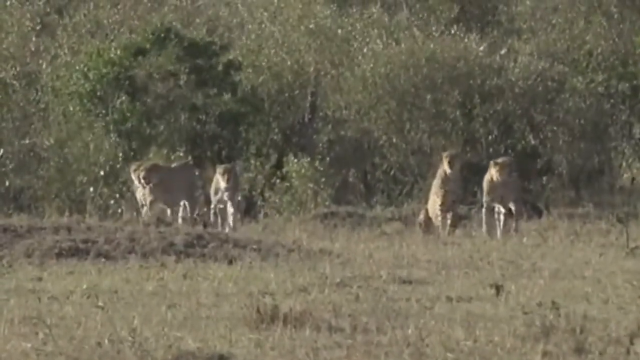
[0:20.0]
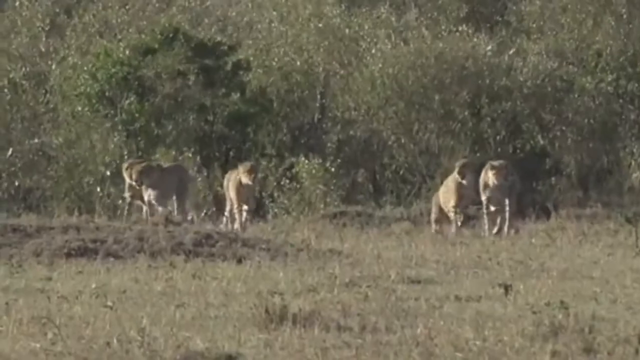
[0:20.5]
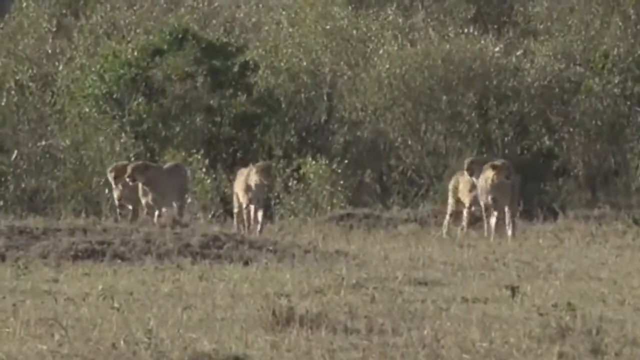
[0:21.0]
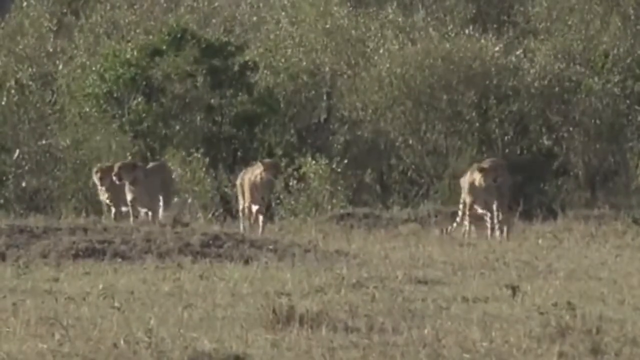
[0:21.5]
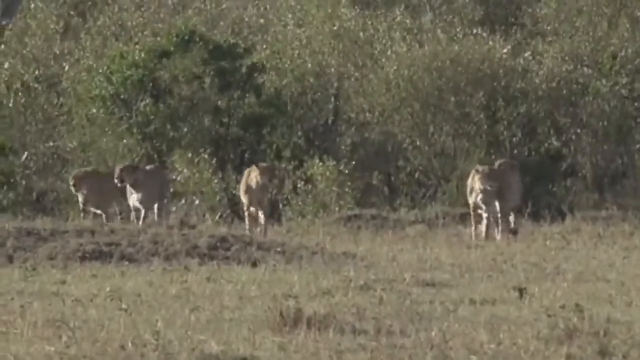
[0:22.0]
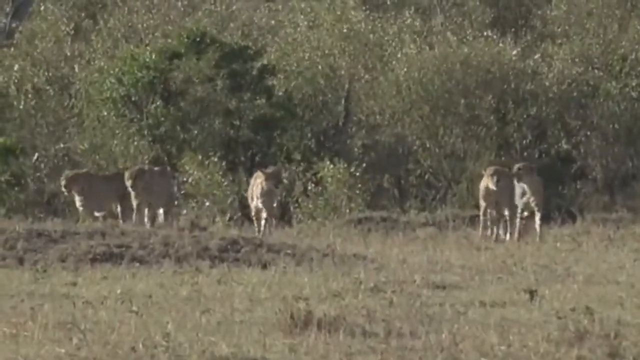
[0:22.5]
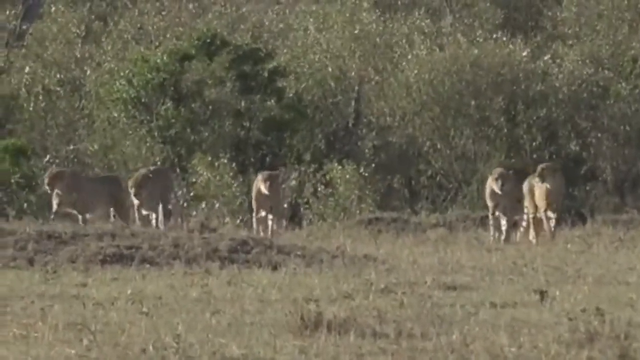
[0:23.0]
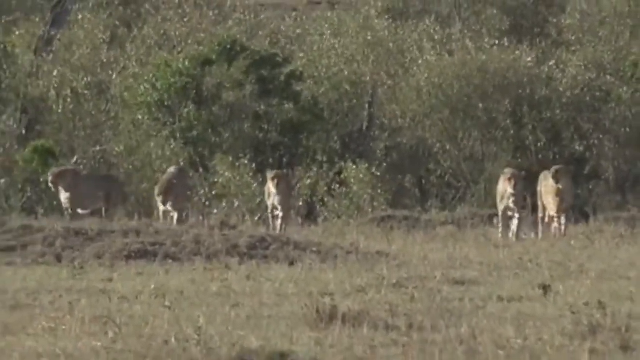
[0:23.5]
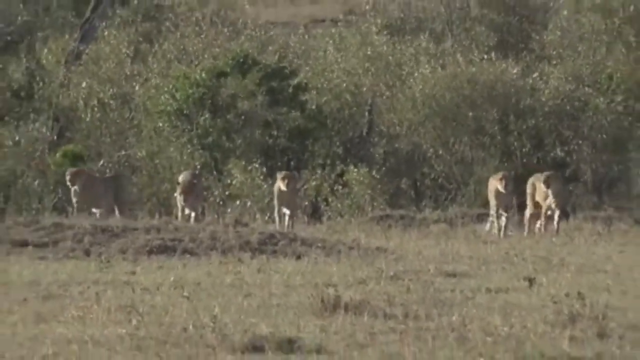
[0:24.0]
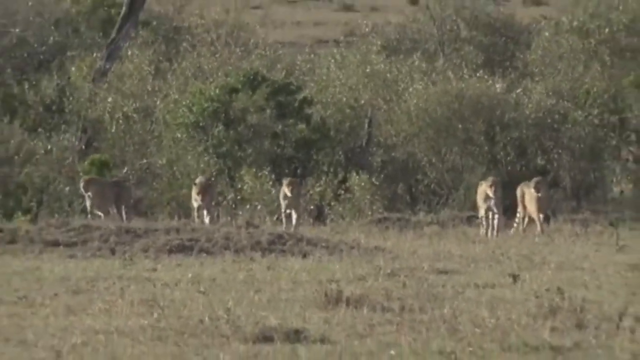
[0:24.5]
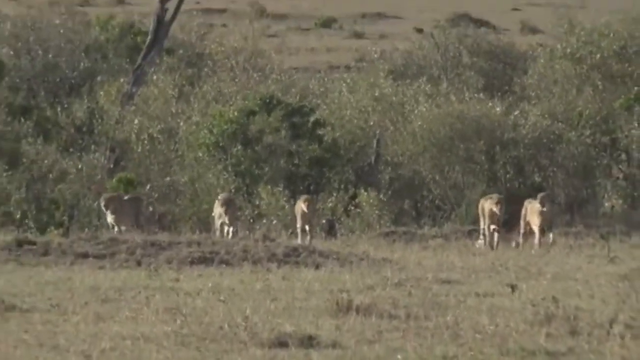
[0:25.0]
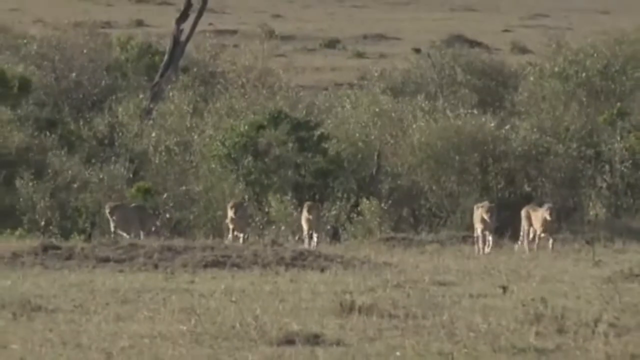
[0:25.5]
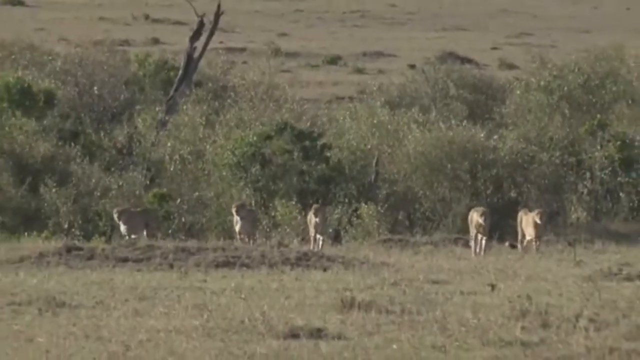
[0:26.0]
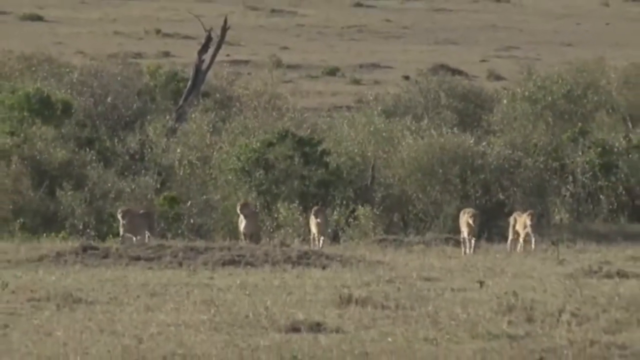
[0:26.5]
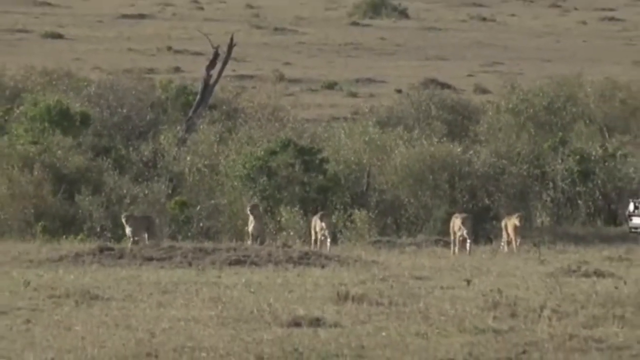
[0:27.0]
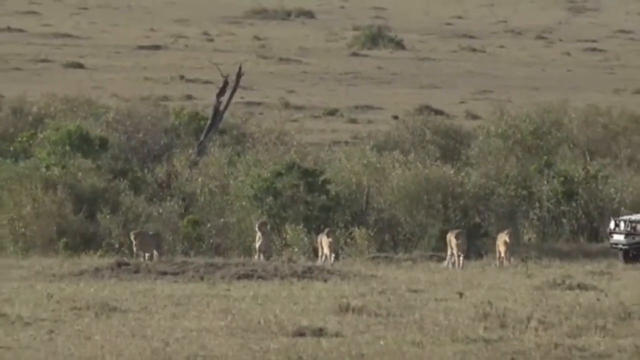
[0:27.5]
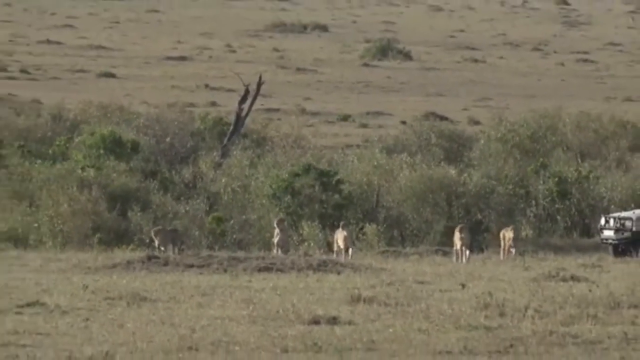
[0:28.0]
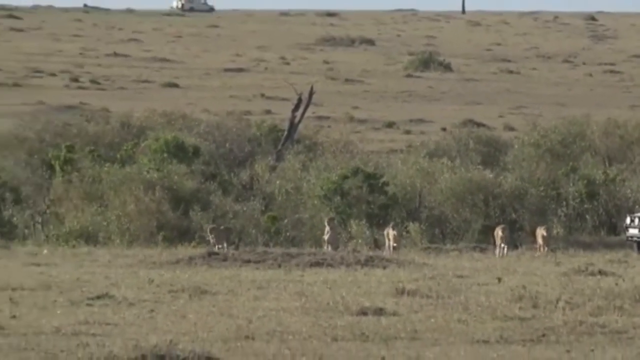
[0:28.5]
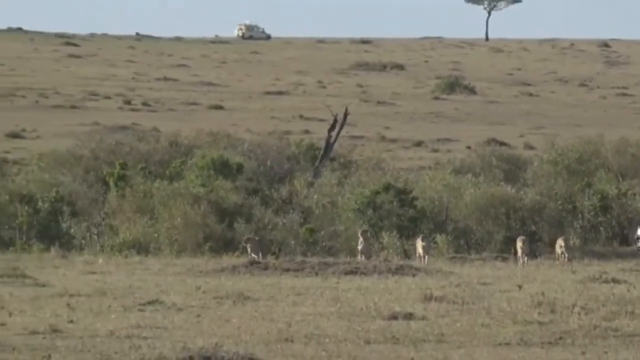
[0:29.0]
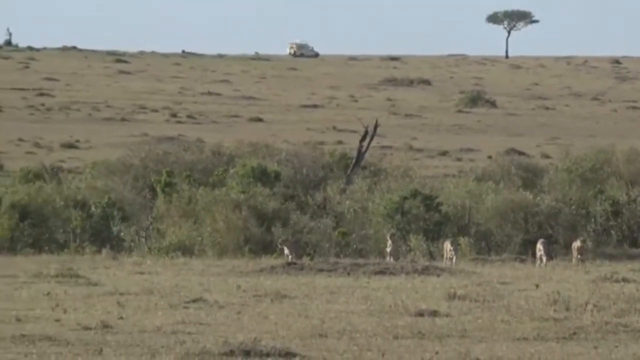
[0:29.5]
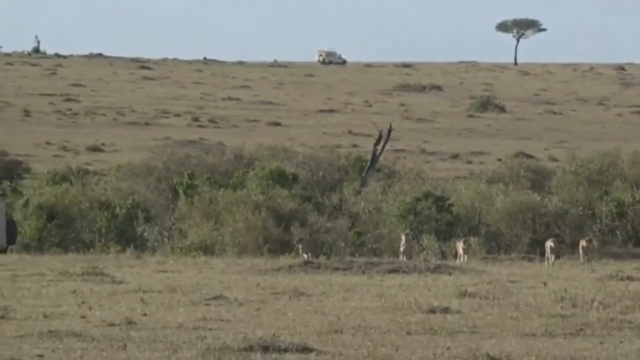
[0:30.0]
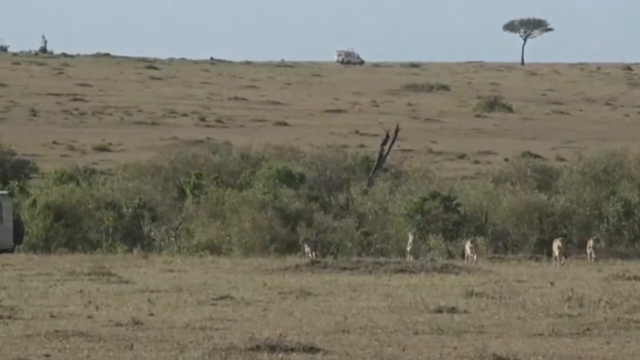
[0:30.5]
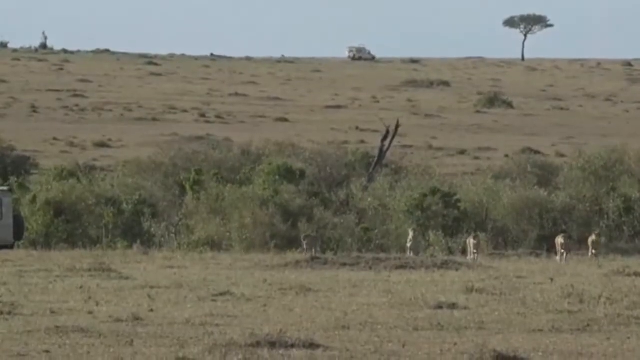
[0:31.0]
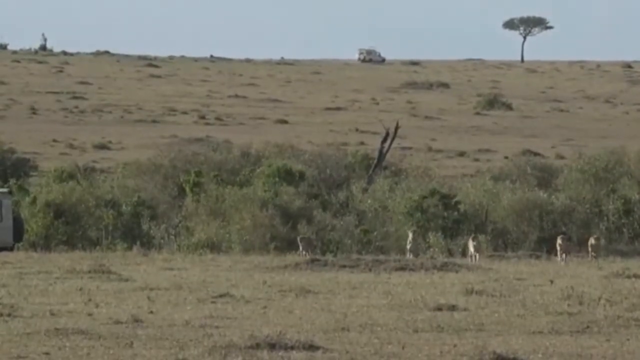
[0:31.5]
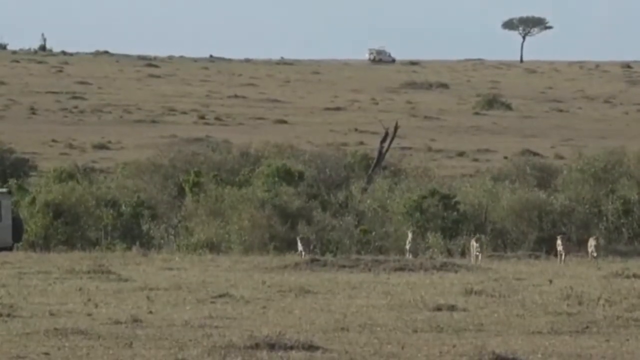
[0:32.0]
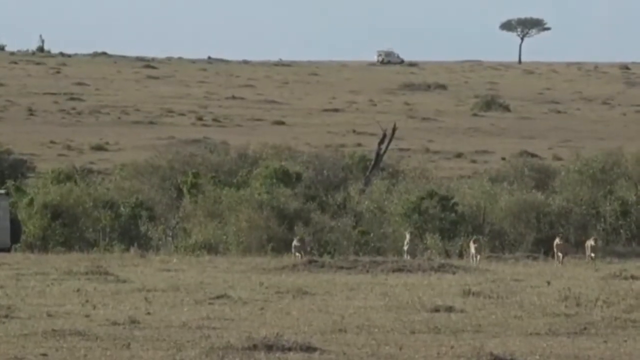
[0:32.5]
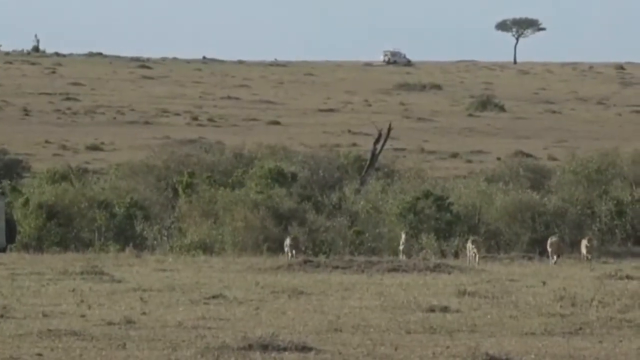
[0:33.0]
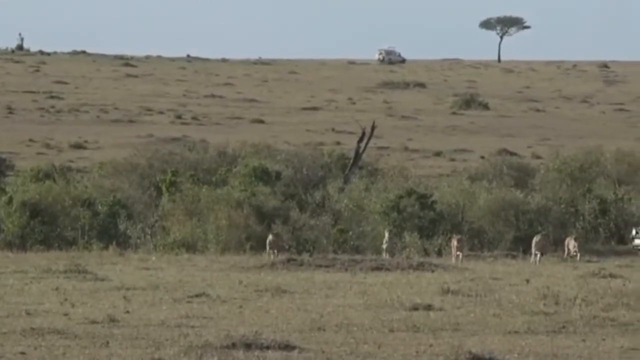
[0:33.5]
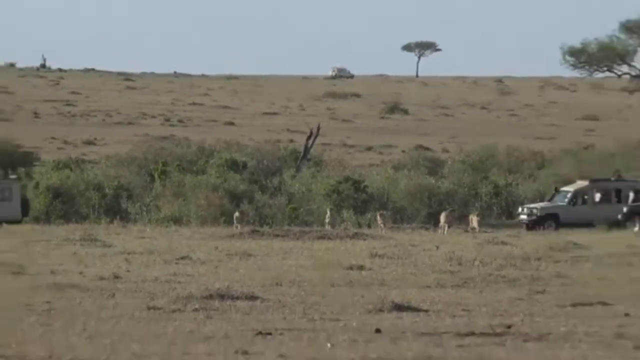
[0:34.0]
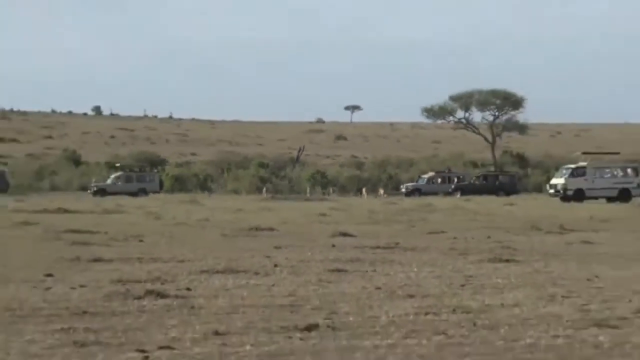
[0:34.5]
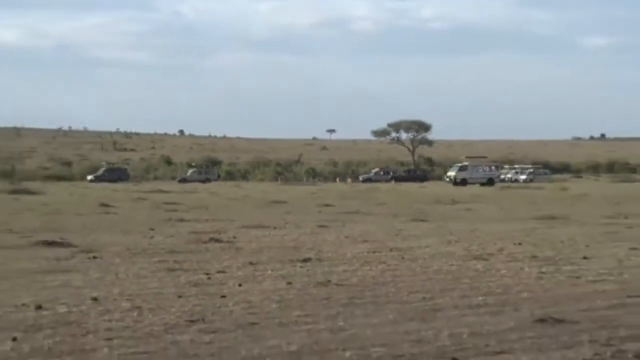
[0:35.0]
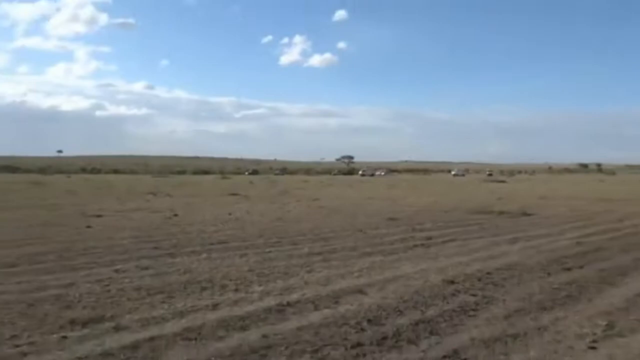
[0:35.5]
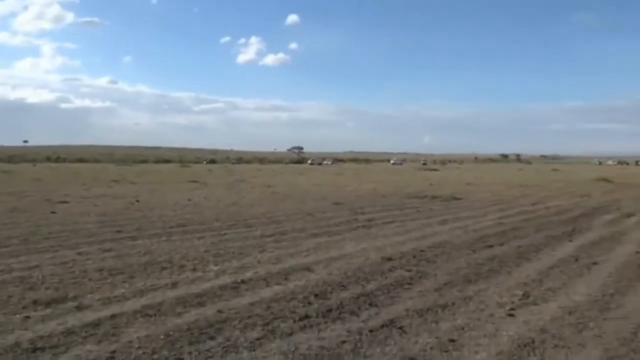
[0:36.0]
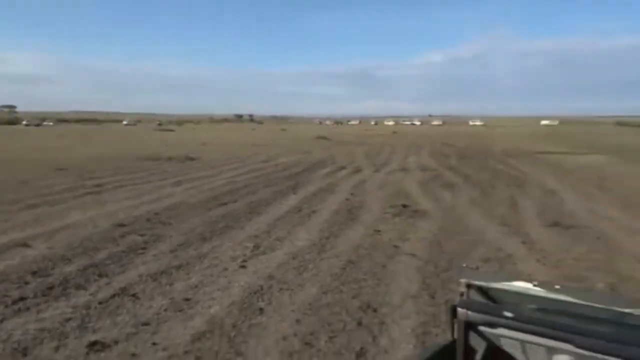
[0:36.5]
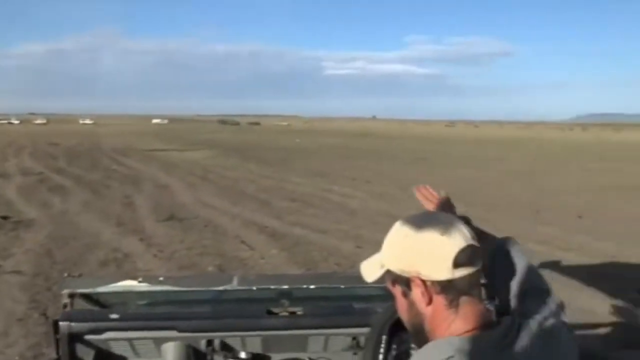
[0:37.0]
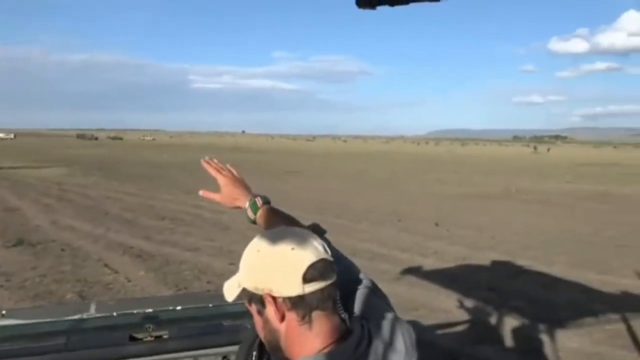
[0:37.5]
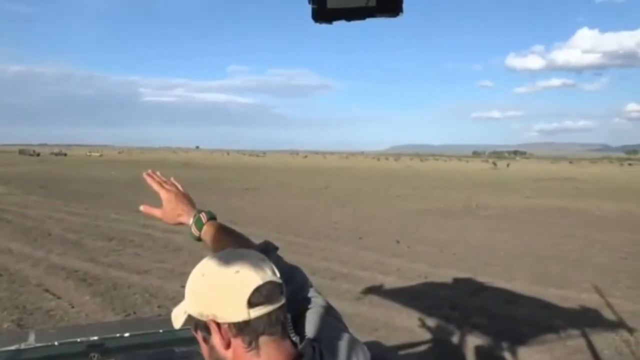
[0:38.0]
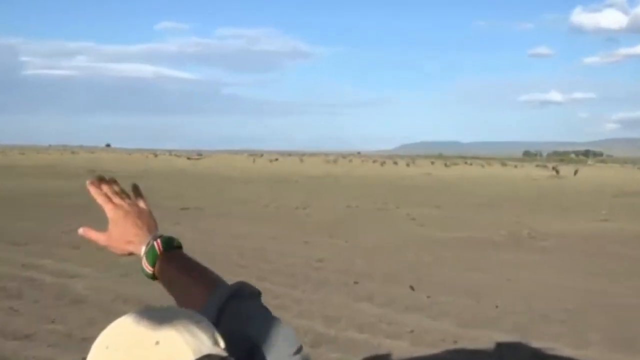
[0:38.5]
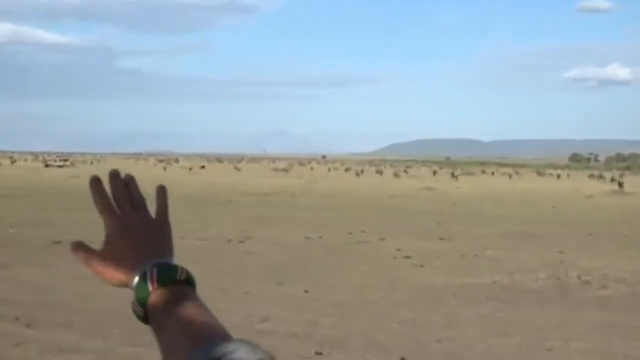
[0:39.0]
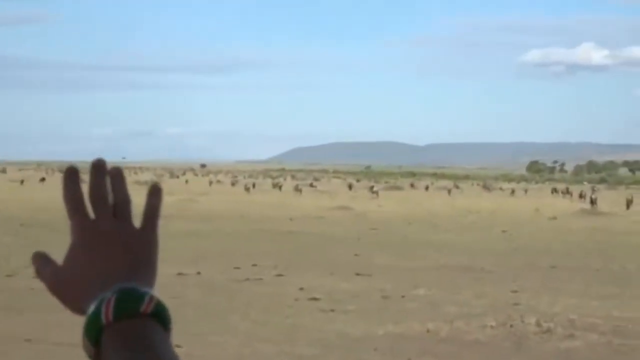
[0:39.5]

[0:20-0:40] A group of five tigers walks across a grass savannah. The tigers fan out slightly, and what looks like a vehicle emerges on the right-hand side. As the camera zooms out, another vehicle appears in the distance on the horizon, along with a few lone trees in what is predominantly almost a desert landscape. The camera then zooms out a lot, revealing a number of other vehicles and a long stretch of soil, almost desert. A man has his head poking out of the top of a vehicle and points with his right arm toward the right-hand side, where there is a herd of animals that are difficult to make out, in front of some trees and mountains in the distance.